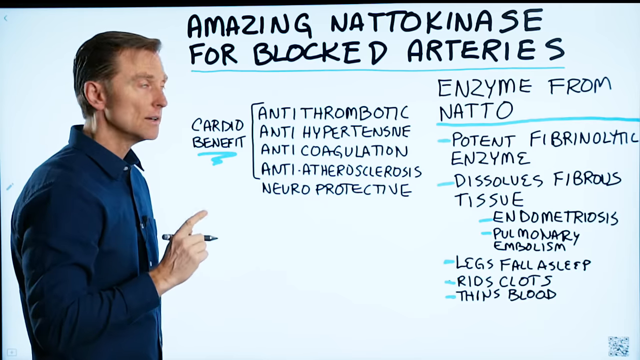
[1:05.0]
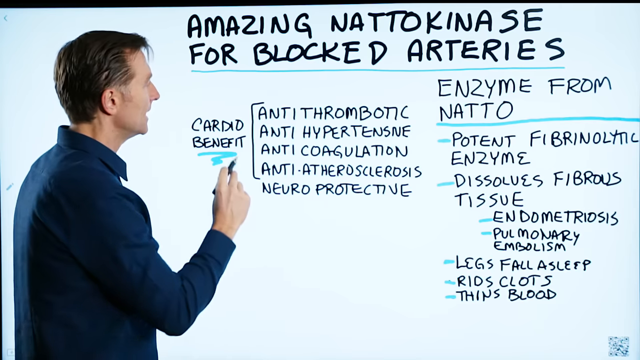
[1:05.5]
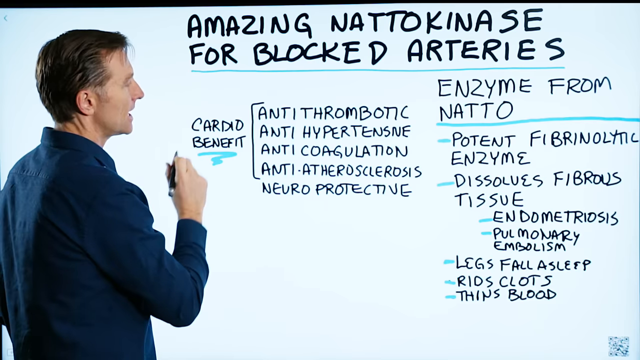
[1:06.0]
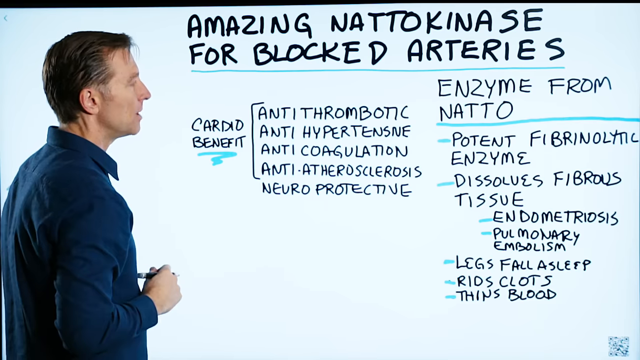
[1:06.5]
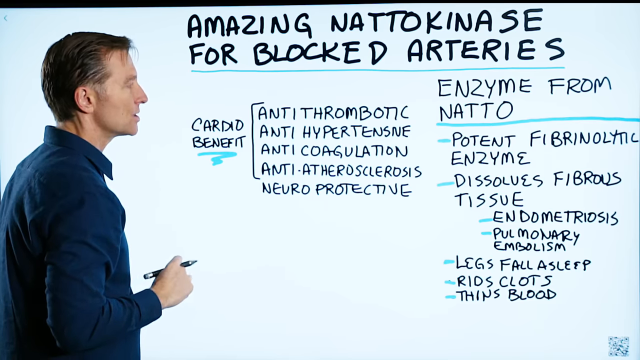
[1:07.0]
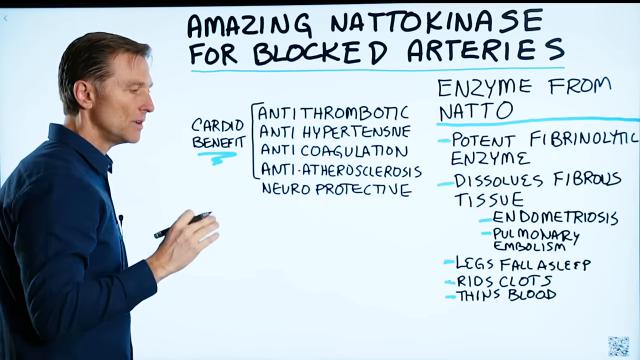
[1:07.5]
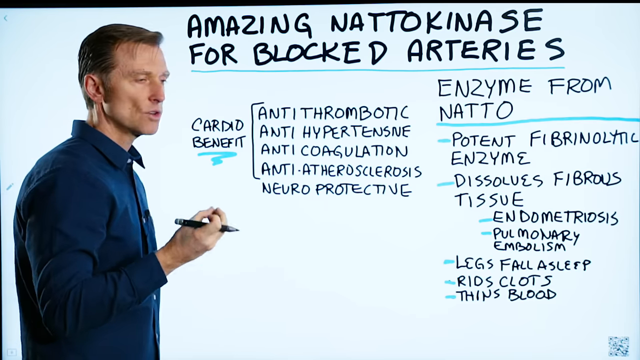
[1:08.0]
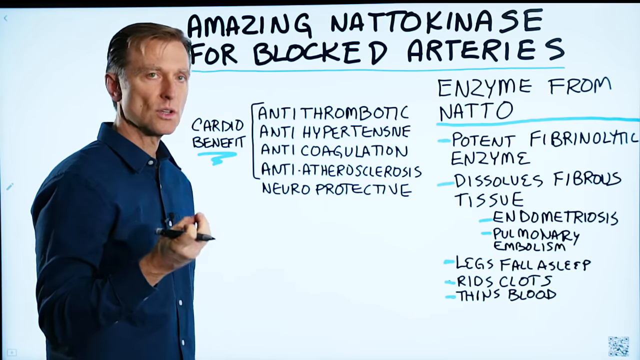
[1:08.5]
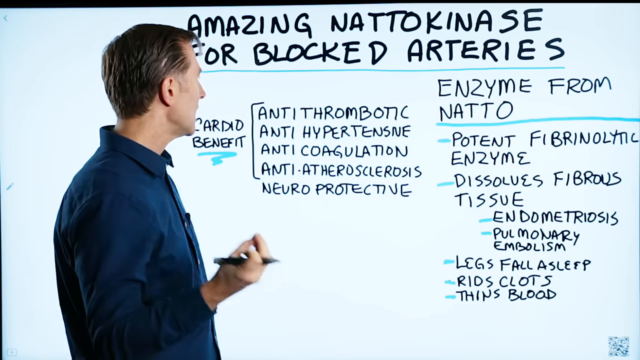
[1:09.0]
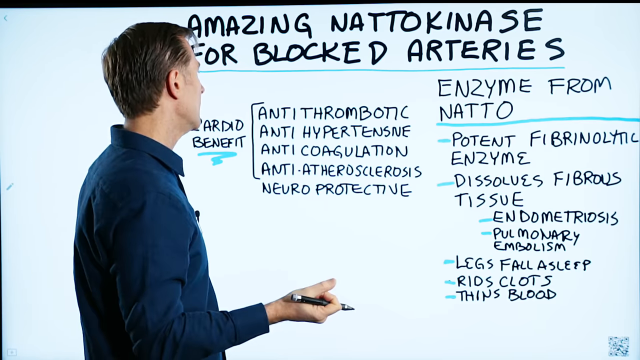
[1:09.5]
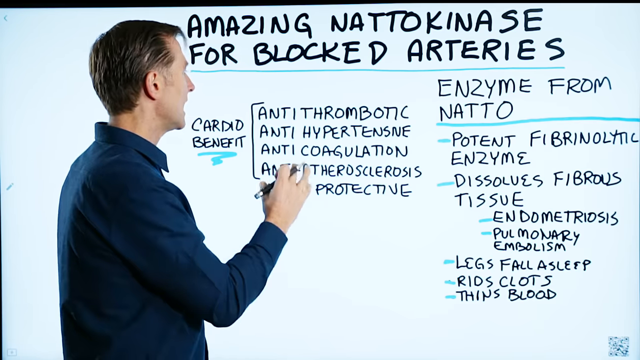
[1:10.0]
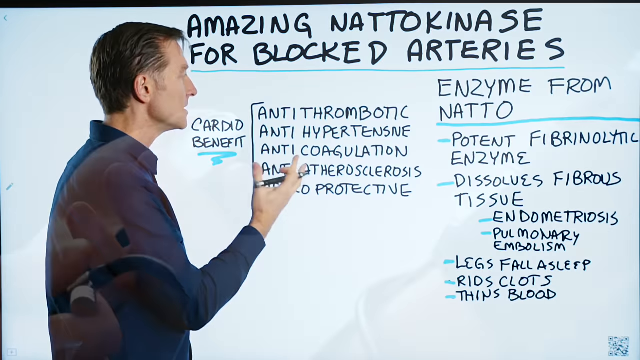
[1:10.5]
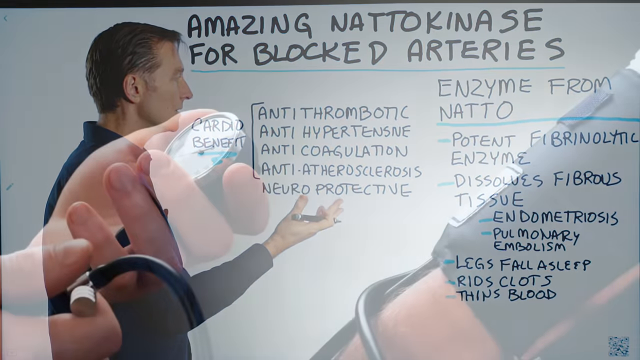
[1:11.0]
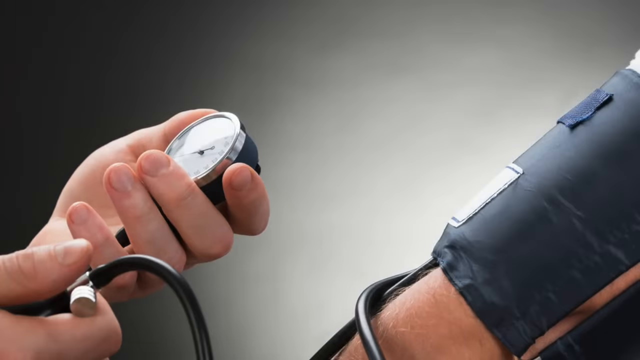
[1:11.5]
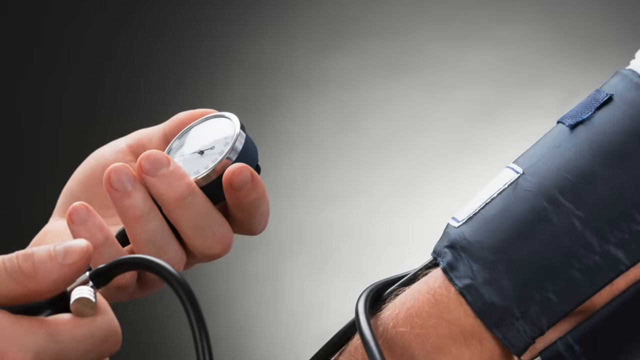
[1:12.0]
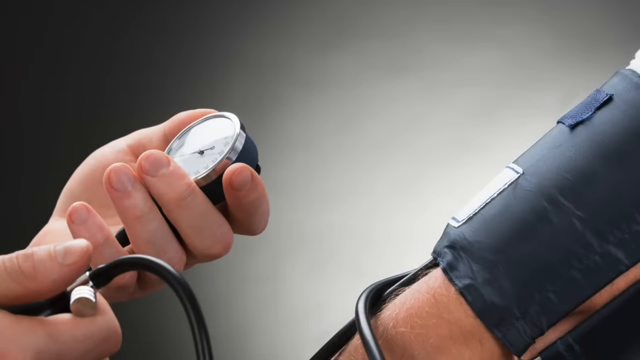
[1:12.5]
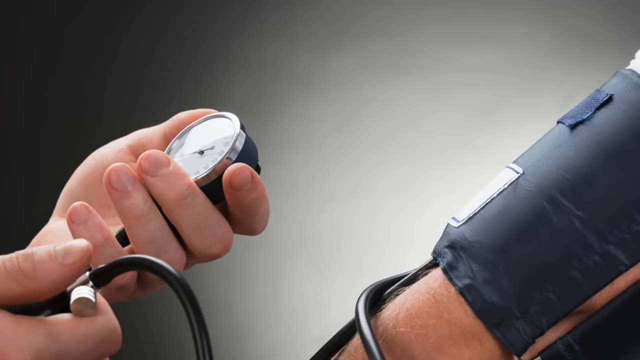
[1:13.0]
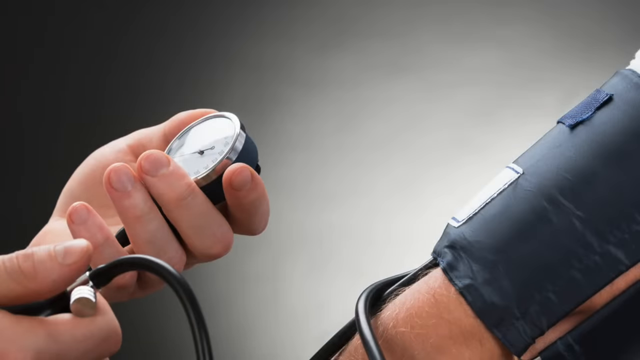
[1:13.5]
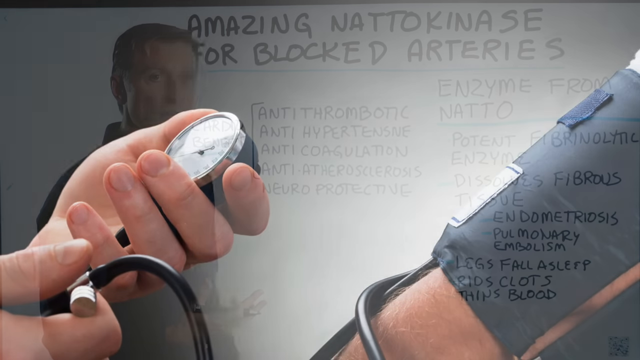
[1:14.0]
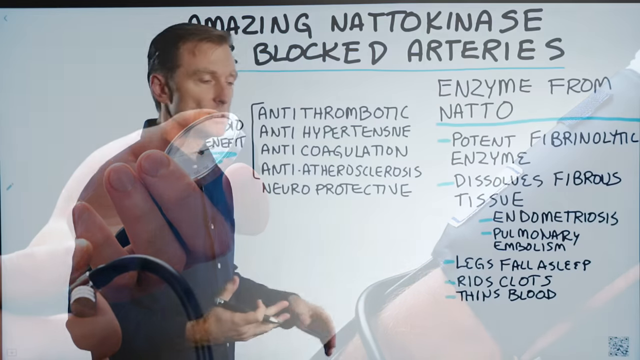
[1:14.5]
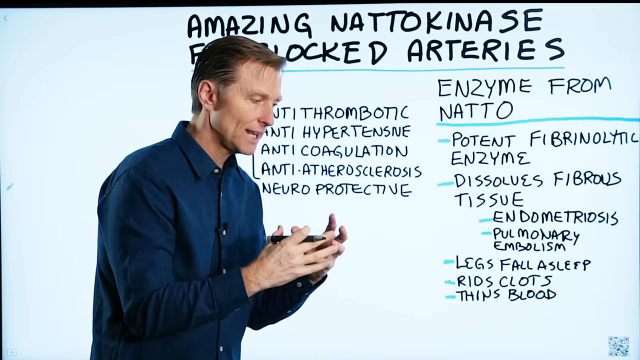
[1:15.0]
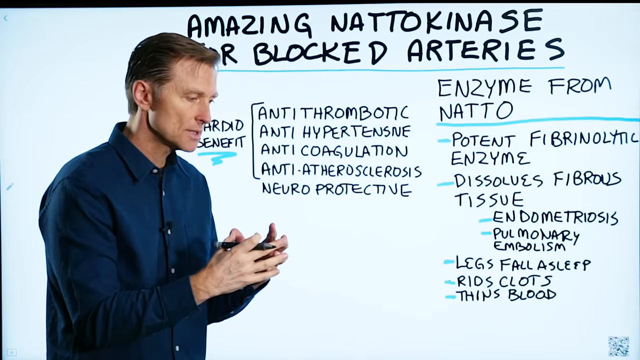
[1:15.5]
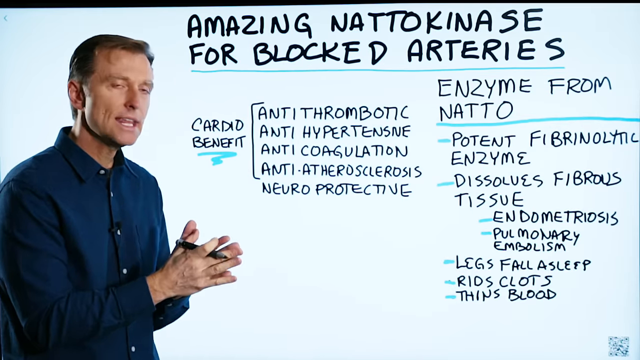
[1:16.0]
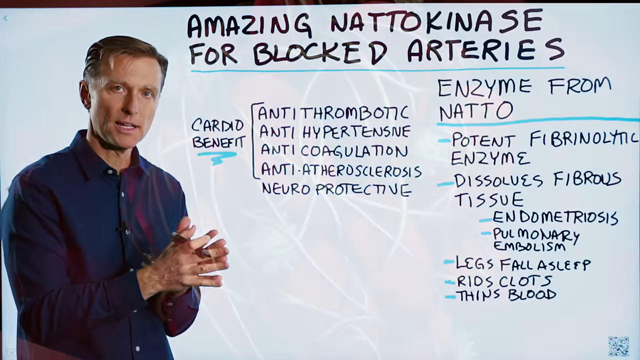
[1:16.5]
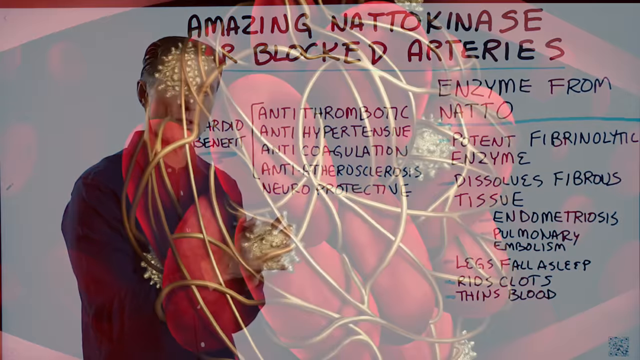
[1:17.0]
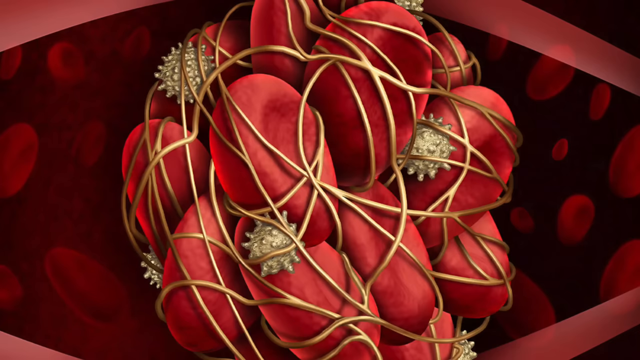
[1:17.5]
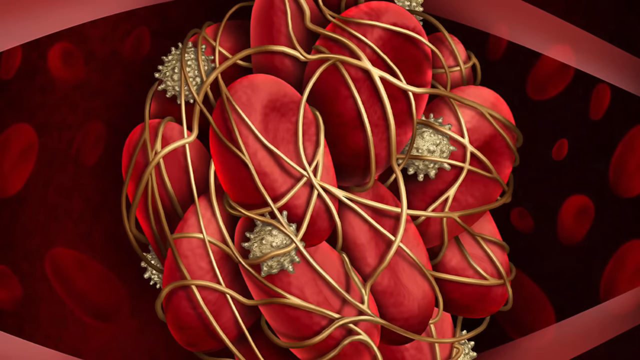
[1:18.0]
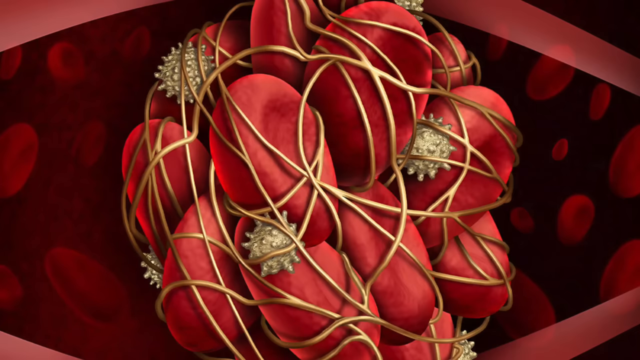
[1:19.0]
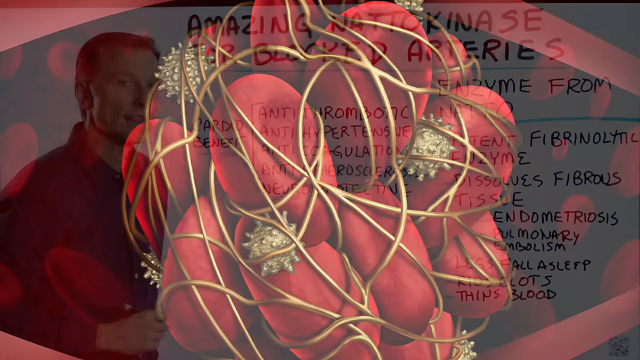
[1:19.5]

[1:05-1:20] The white man in the dark blue shirt stands in front of the whiteboard, talking and pointing to the board. A stock photo shows someone getting a blood pressure check. An image of red blood cells caught up together, probably coagulated, appears. The man is the only person shown besides the stock photo, and the video alternates between him at the whiteboard and images of medical conditions involving red blood cells.